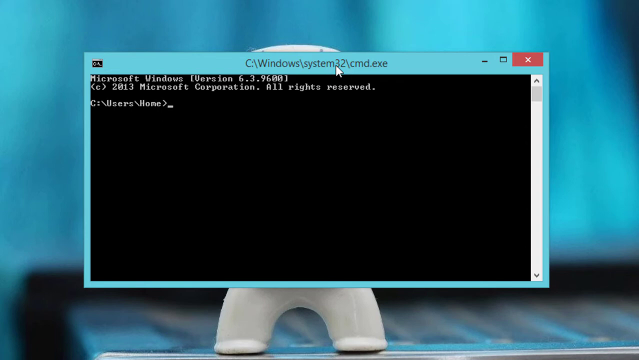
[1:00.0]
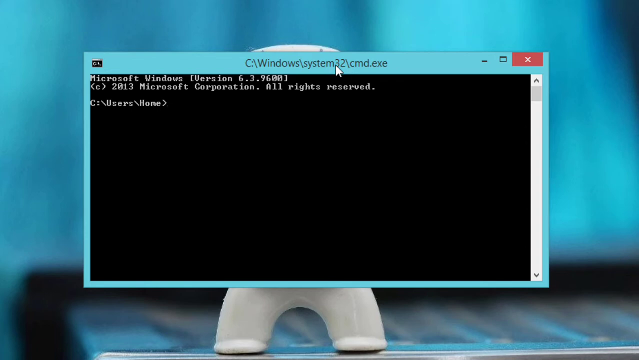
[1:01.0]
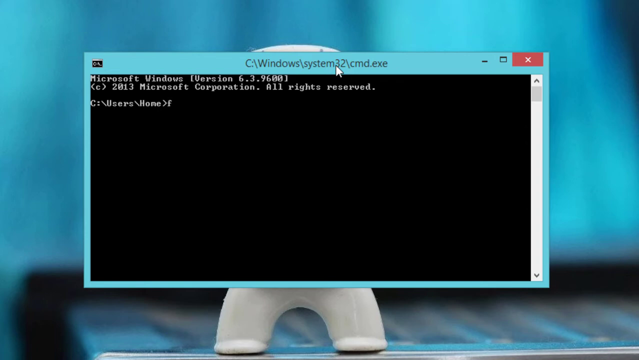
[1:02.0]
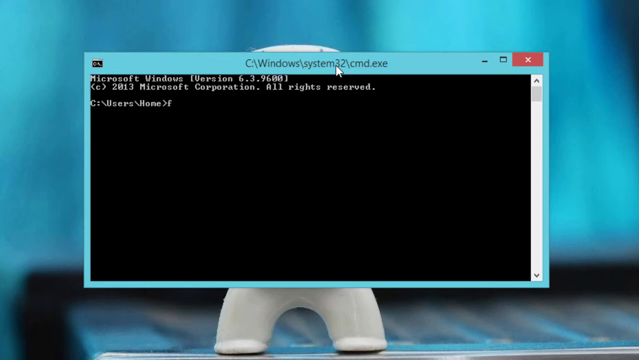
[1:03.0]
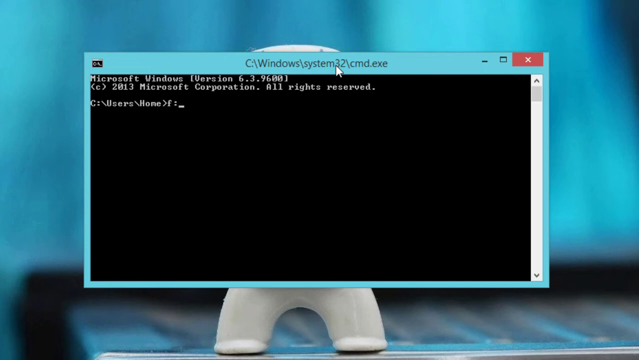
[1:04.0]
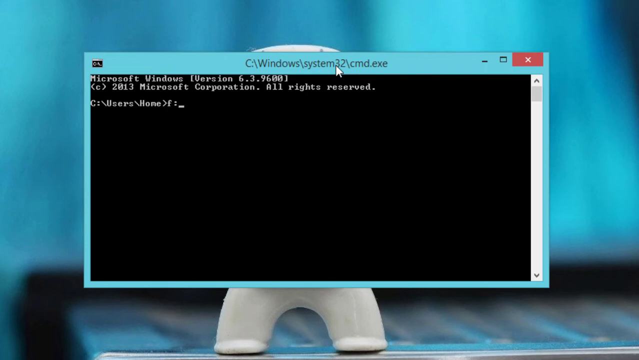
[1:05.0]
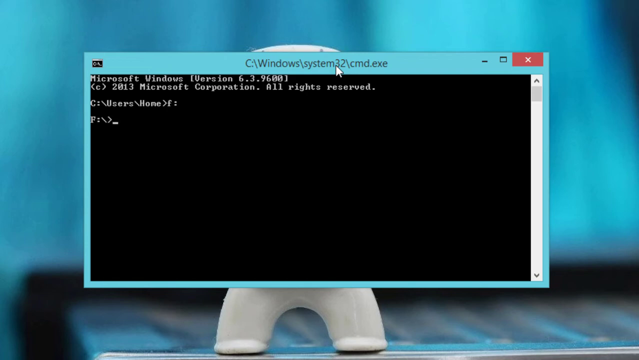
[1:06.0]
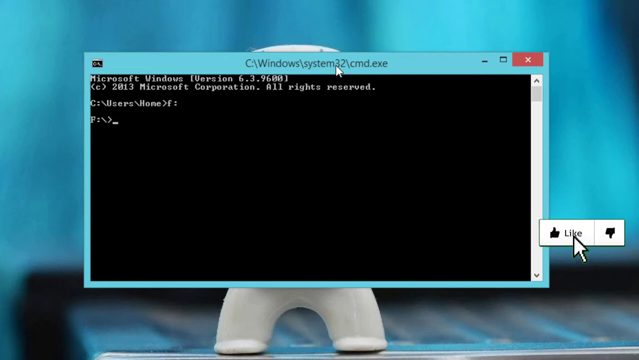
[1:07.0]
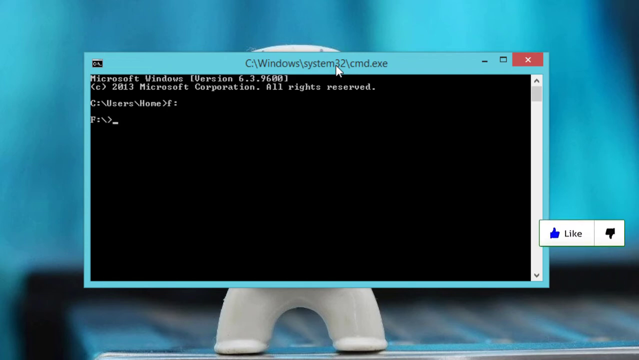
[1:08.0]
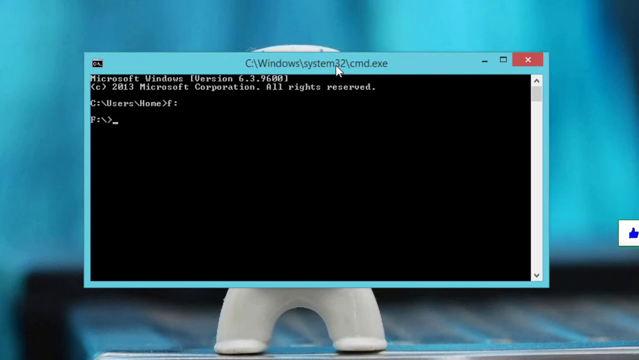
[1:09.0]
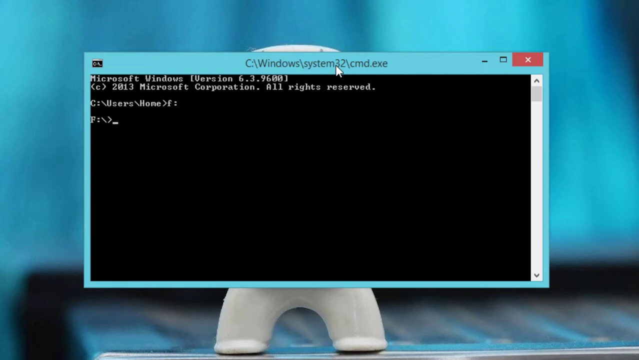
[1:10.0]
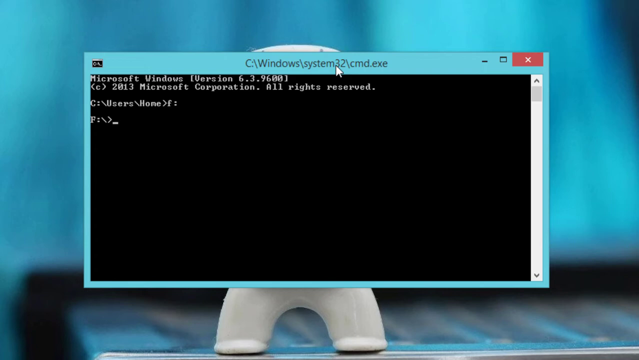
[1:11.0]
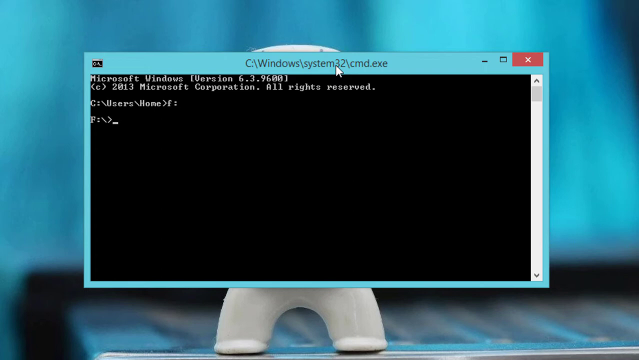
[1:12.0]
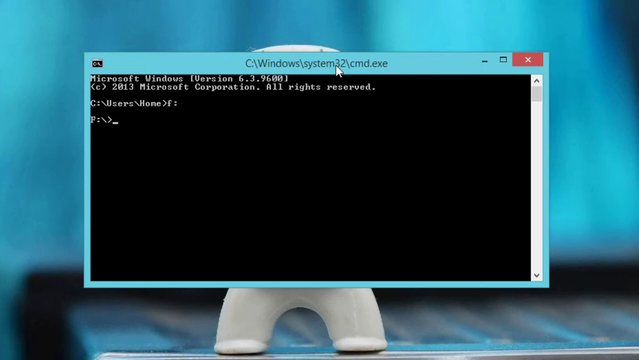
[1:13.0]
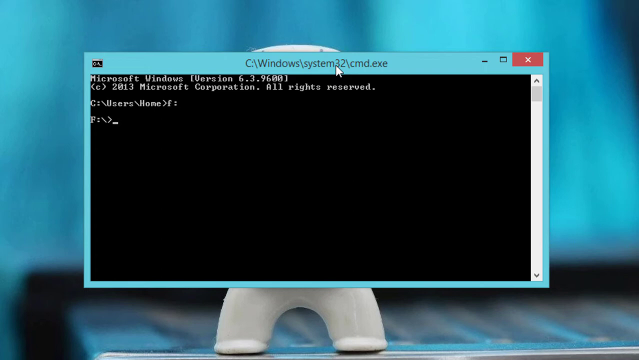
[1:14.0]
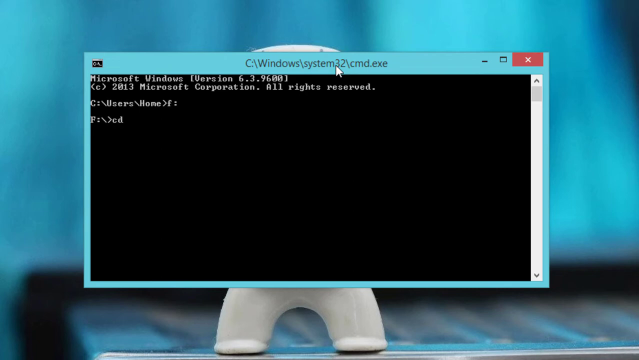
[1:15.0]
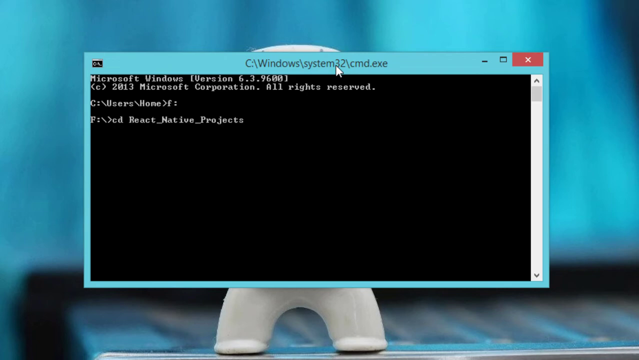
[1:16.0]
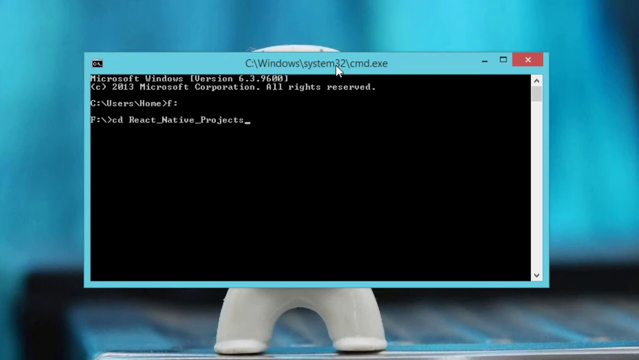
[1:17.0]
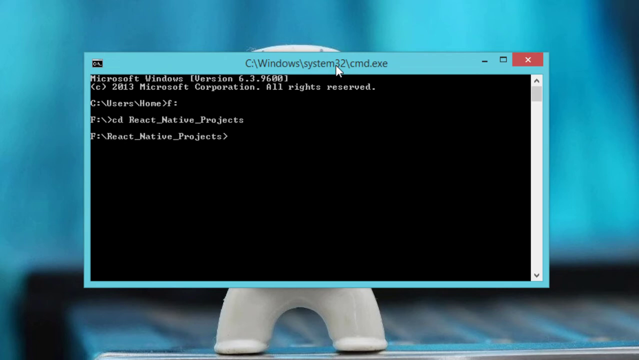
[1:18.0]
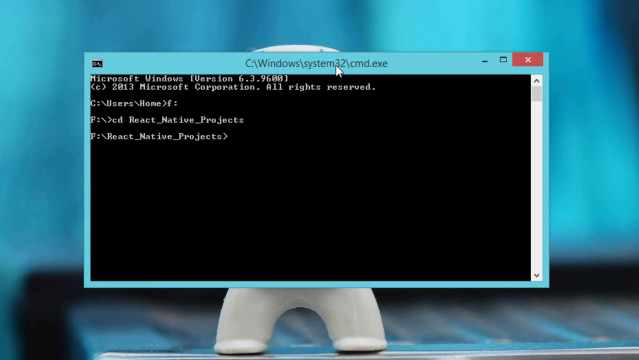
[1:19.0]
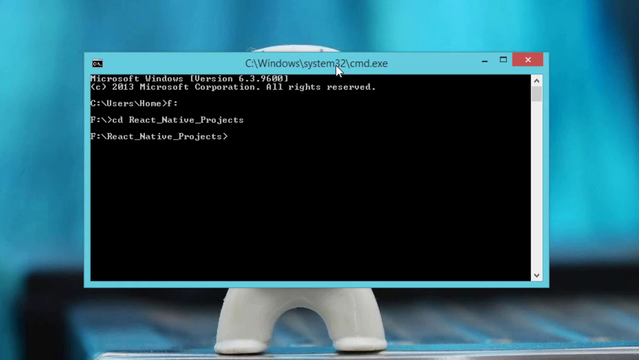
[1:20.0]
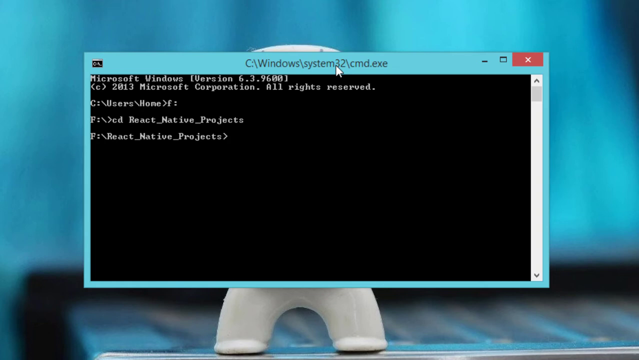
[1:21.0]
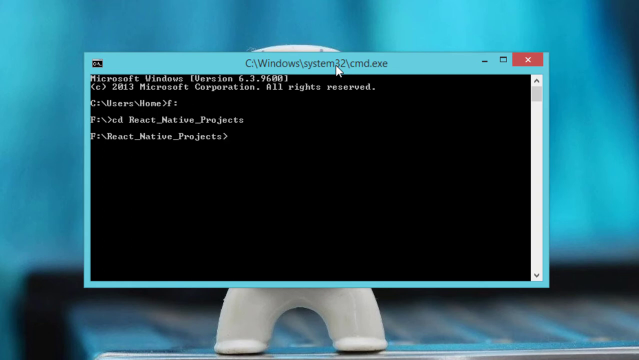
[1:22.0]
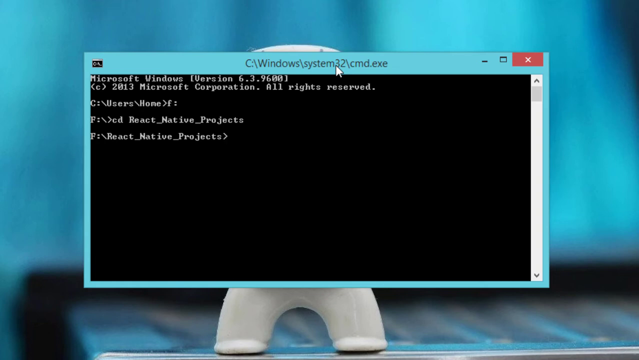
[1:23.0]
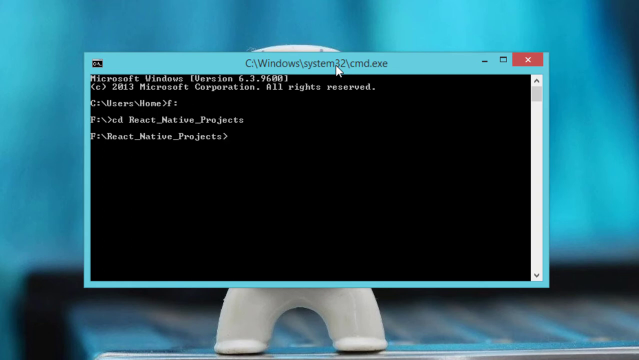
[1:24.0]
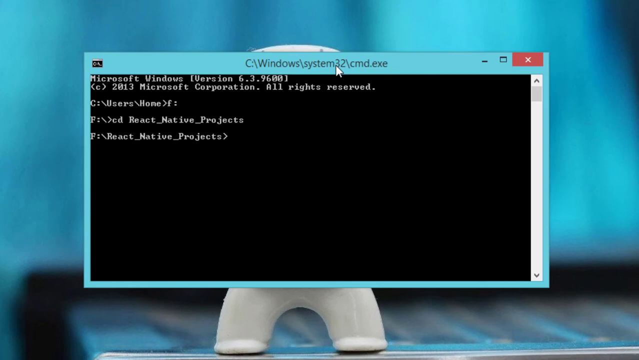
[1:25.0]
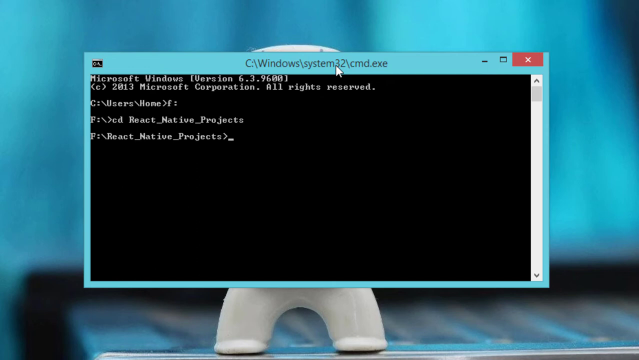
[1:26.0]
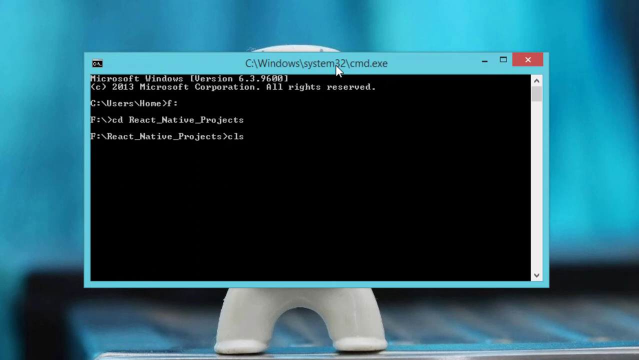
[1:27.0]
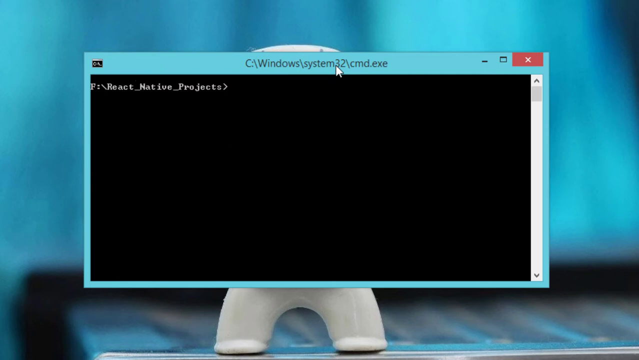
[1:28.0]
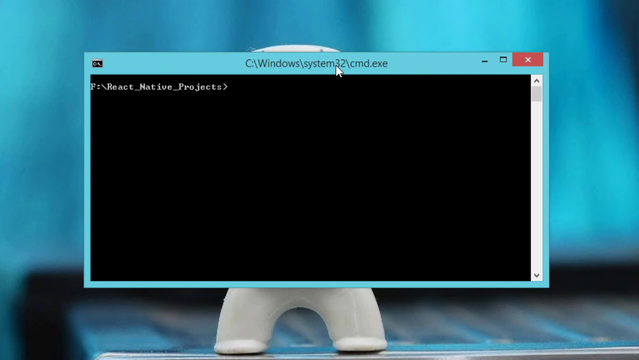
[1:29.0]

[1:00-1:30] The Windows command prompt is open, showing "version 6.3 build 9600 copyright 2018 microsoft corporation all rights reserved". The prompt starts at C:\users\phone>, the user switches to the F drive with f:, then at F:\> types cd react_native_projects, and the final line reads F:\react_native_projects>, showing they are inside that folder.